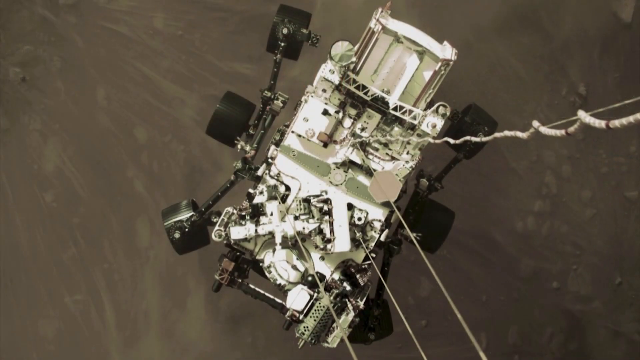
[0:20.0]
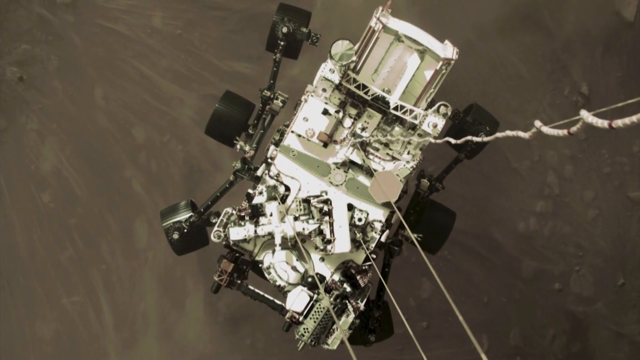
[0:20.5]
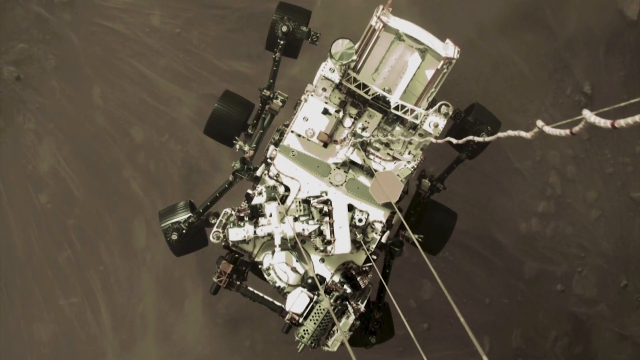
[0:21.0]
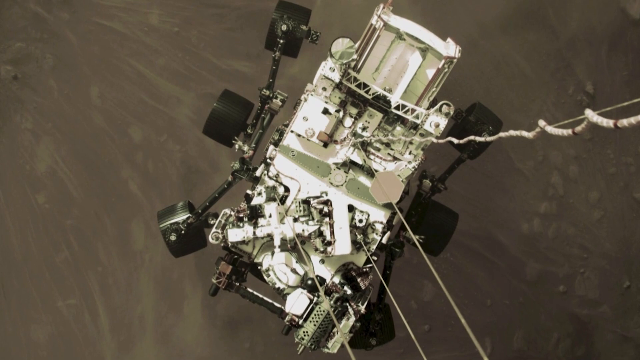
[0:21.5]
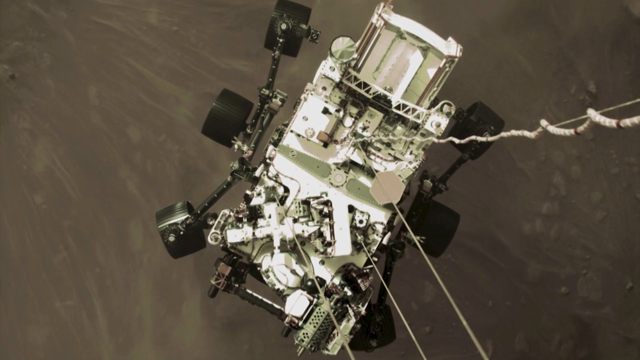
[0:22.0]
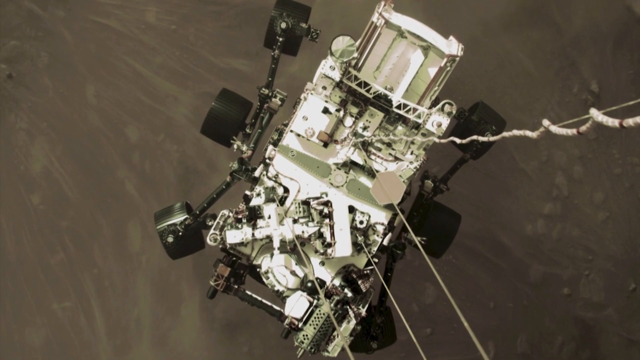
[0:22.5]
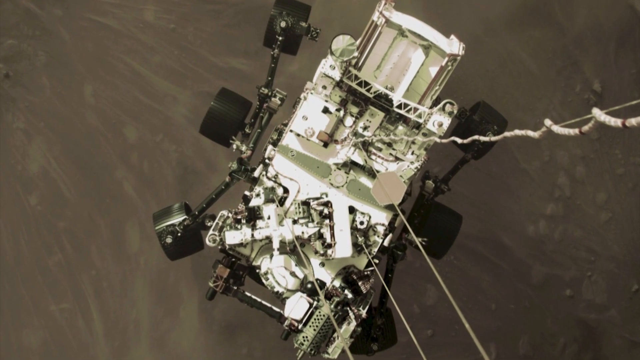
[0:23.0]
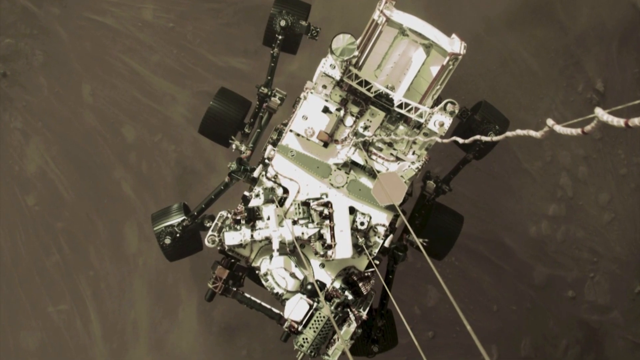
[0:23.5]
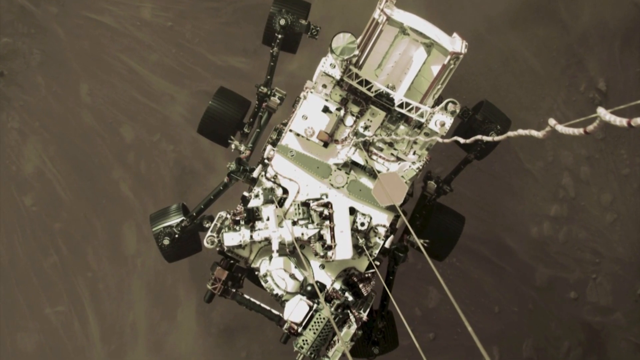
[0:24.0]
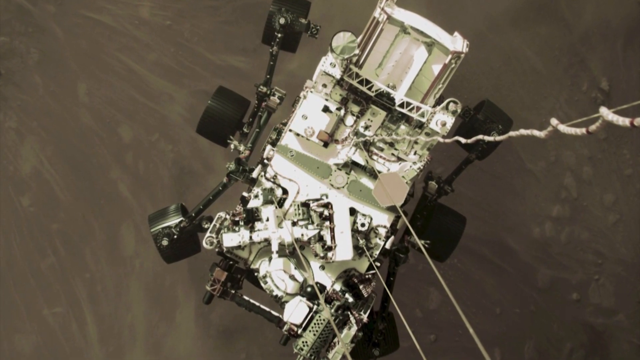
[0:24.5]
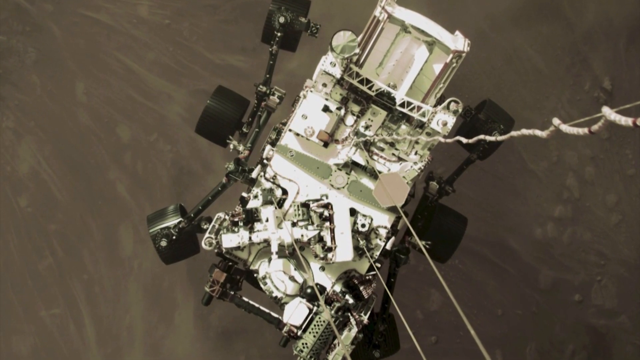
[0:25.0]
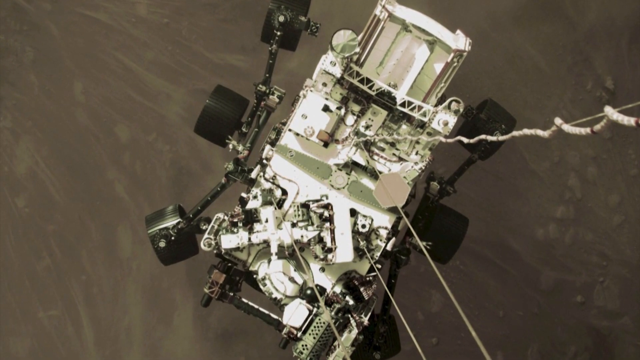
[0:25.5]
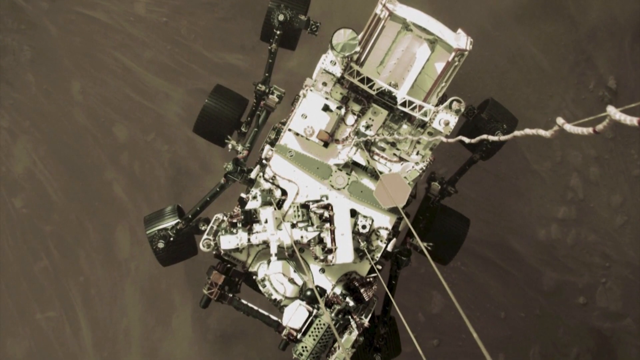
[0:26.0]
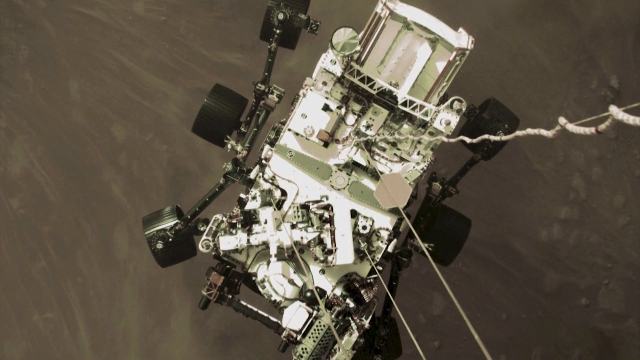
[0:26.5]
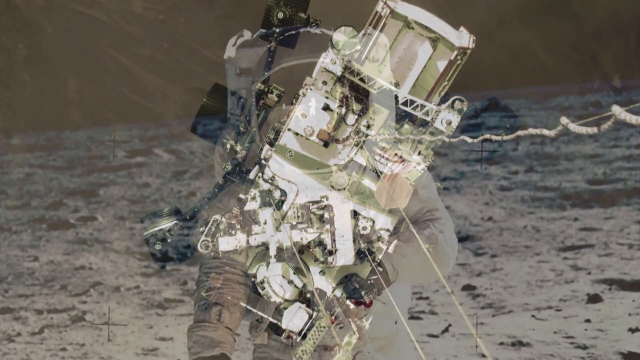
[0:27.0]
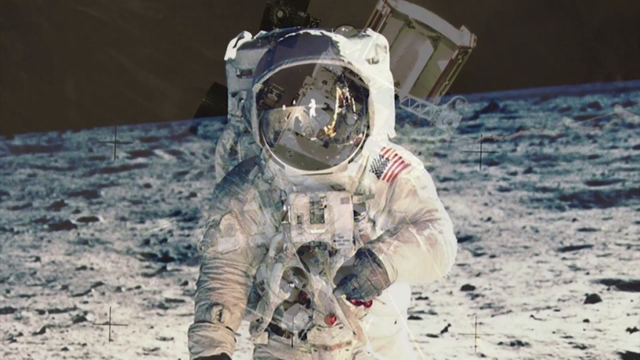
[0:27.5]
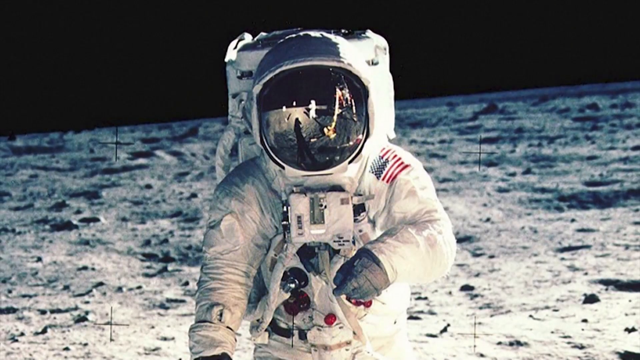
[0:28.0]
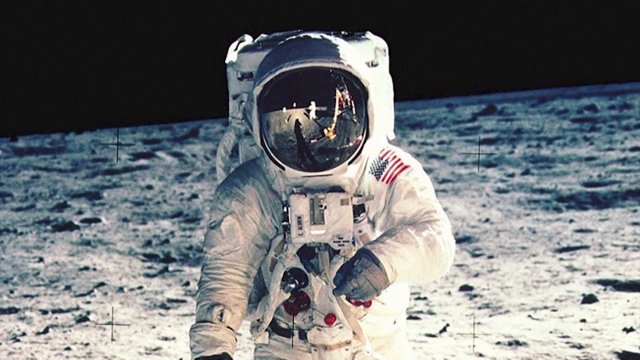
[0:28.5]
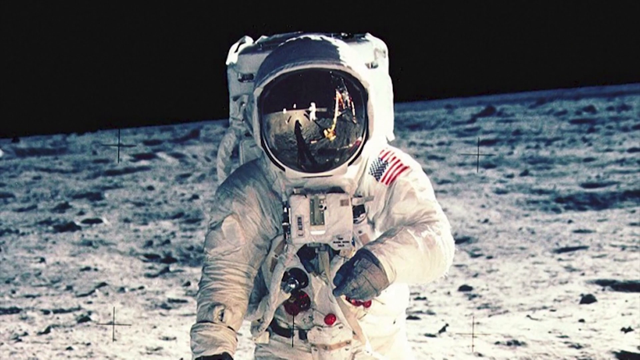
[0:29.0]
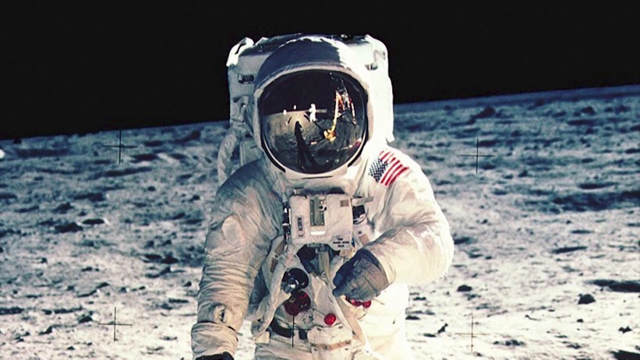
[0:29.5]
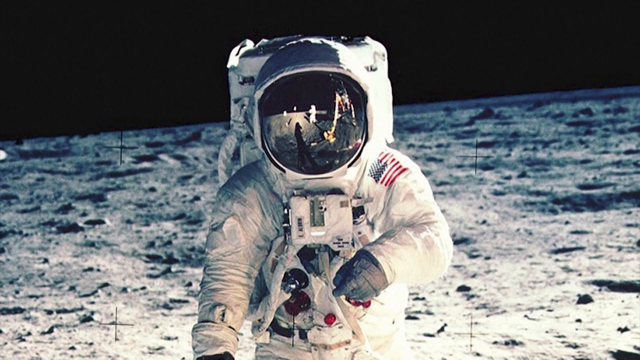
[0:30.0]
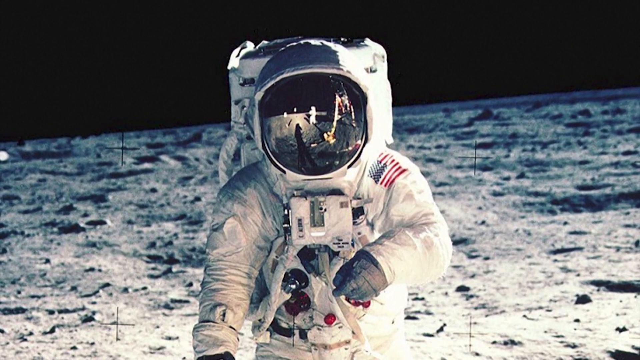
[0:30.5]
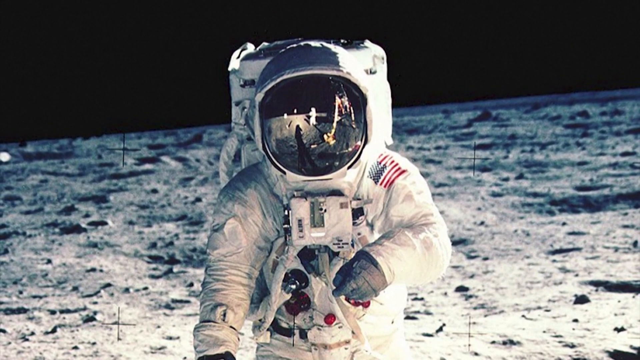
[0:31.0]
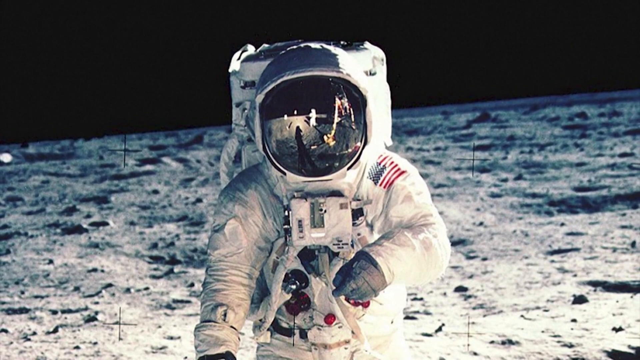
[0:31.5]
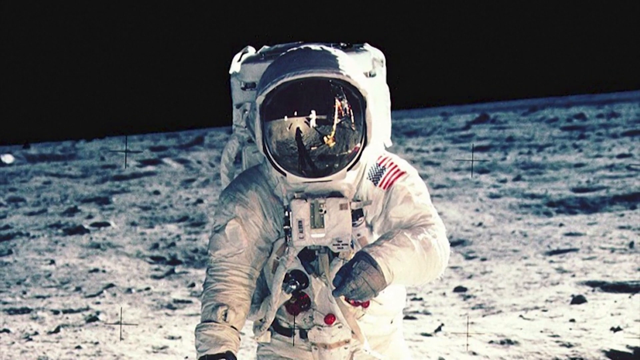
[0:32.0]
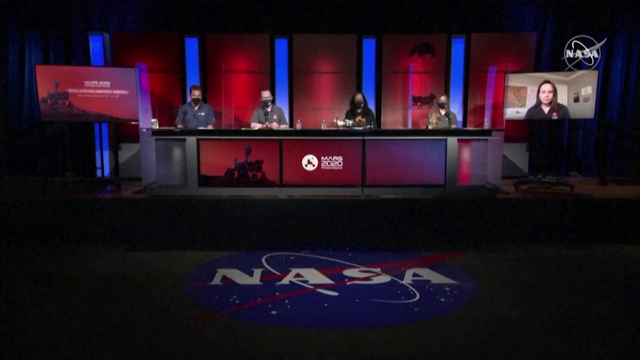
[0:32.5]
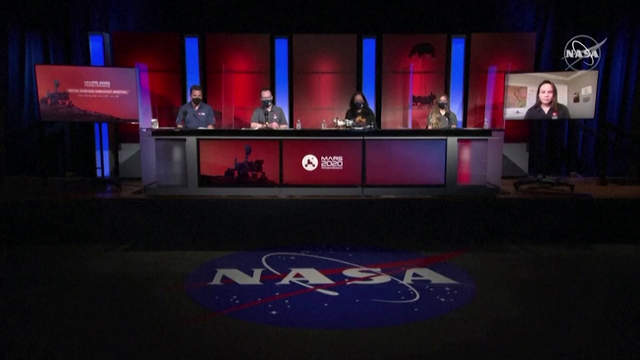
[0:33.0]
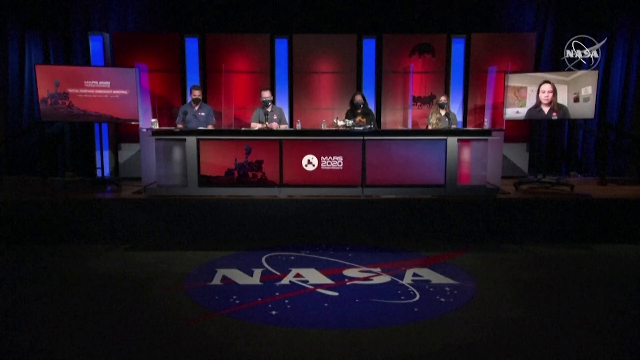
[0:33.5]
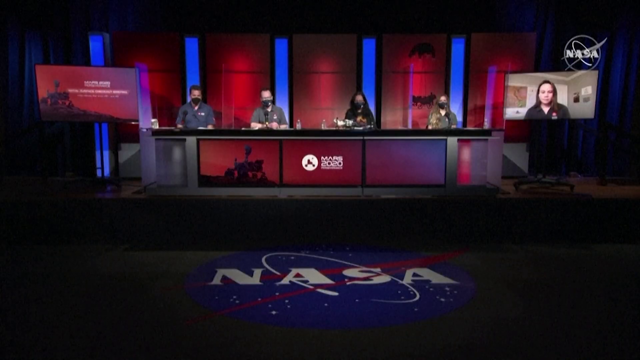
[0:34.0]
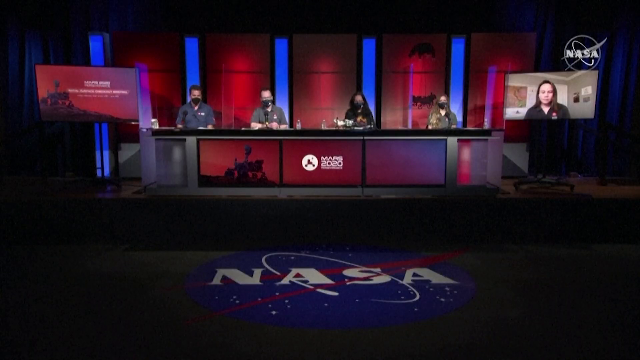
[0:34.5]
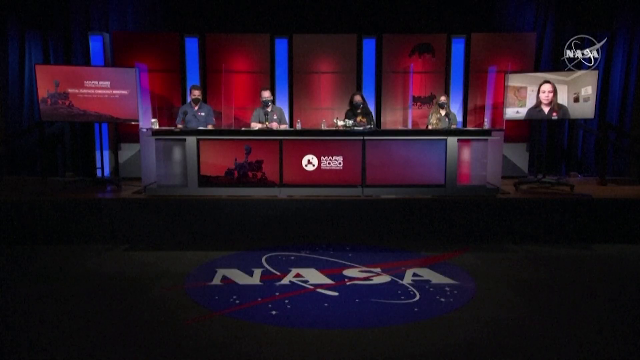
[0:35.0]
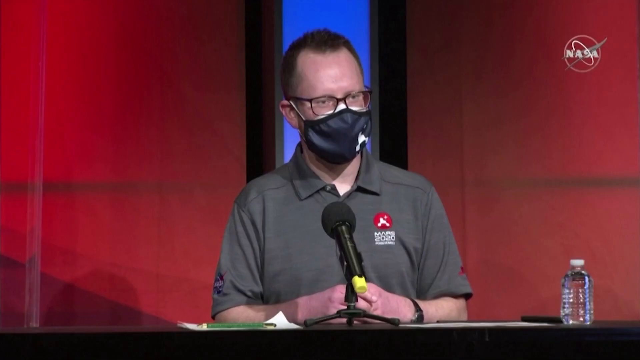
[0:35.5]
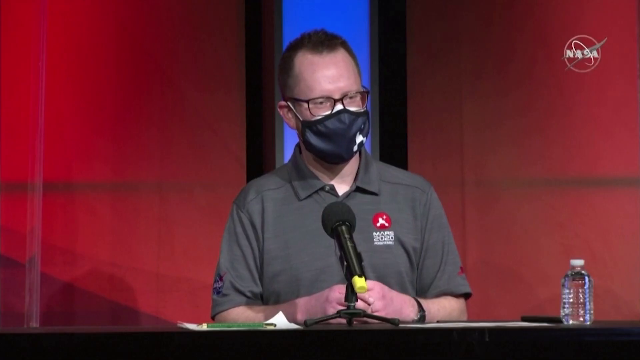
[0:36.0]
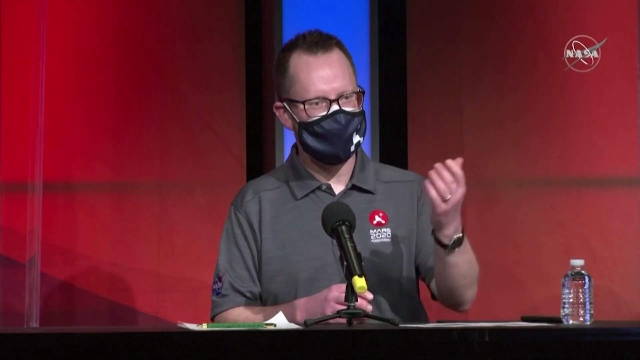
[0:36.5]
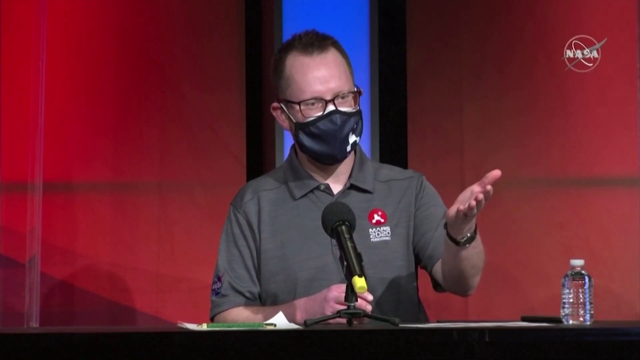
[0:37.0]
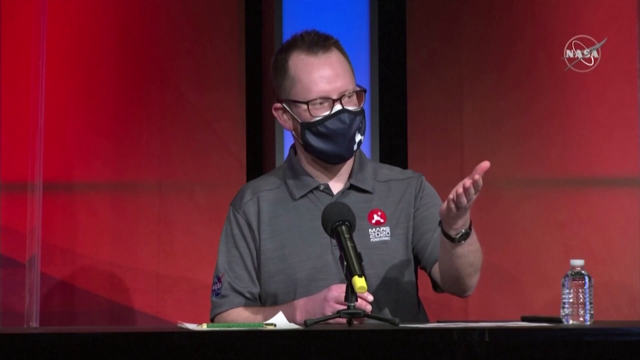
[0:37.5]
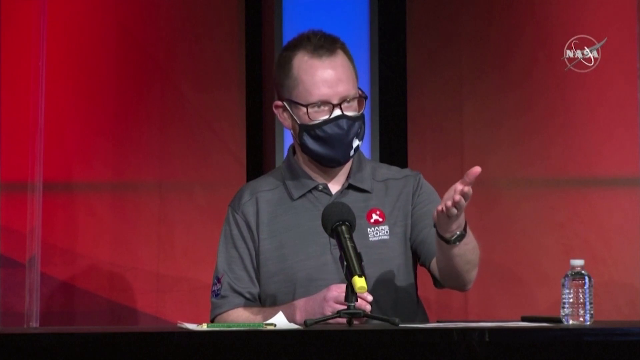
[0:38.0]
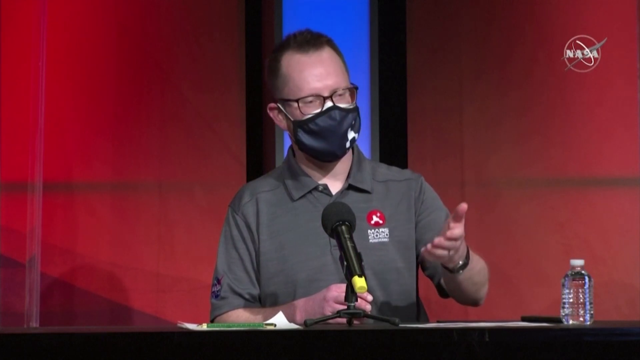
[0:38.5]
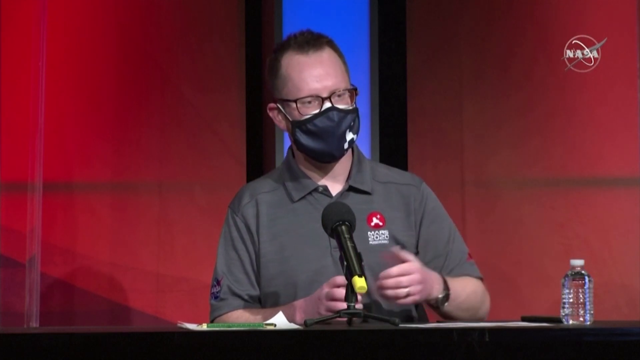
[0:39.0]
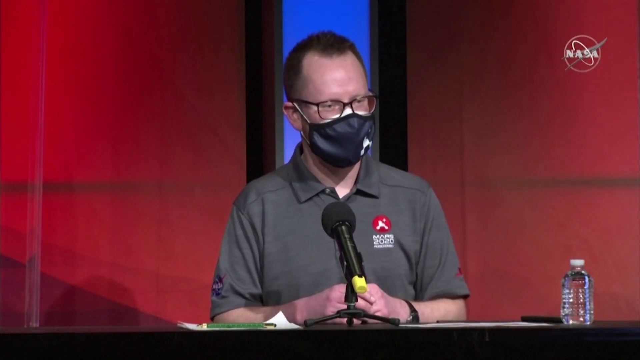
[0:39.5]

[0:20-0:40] The Mars rover, which has six wheels, is seen in a top view from the parachute, where the camera is mounted. This is a still photo, and the camera pans a little closer. Footage that may be old shows an astronaut on the moon, with dark space and small craters on the moon's surface behind them; it is a still shot, possibly from the 60s. Next comes what is possibly a press conference, with people wearing masks and a lot of red lighting. A desk is mostly red with a little black, and there are two screens: the one on the right shows a person, a woman or a man, and the one on the left shows some writing, what looks to be the rover, and some red background. A NASA symbol is on the floor. A close-up shows somebody answering or asking questions while wearing a mask. The walls are red, with "NASA" in white. A bottle of water is on the right side of the screen, and there is a little bit of blue behind the man speaking. He has a grayish green shirt with a red logo, glasses and short hair. The footage then returns to the rover landing.